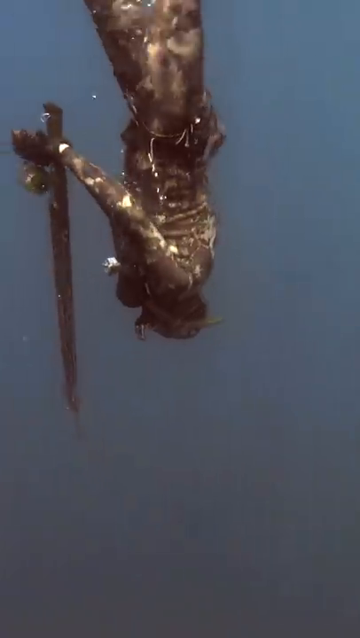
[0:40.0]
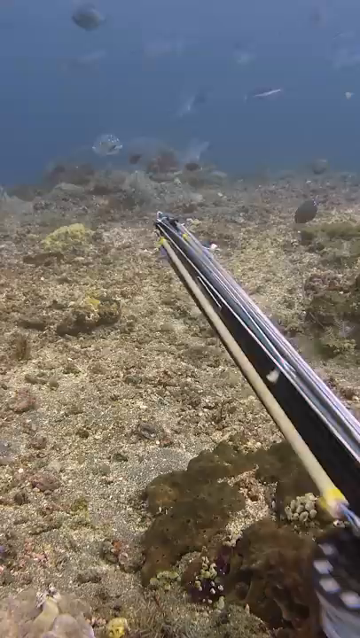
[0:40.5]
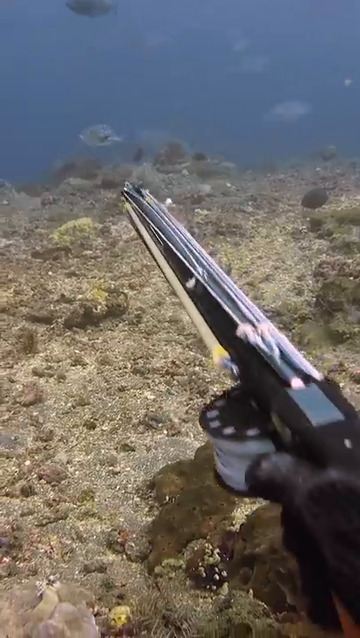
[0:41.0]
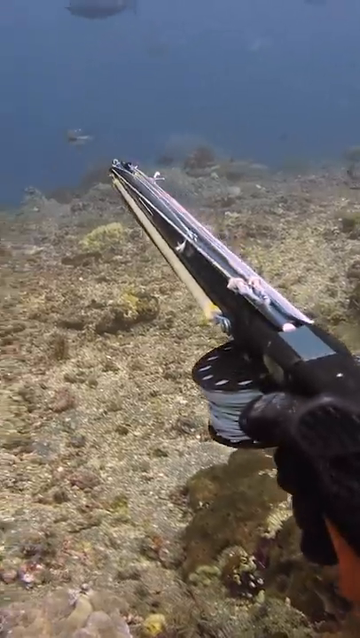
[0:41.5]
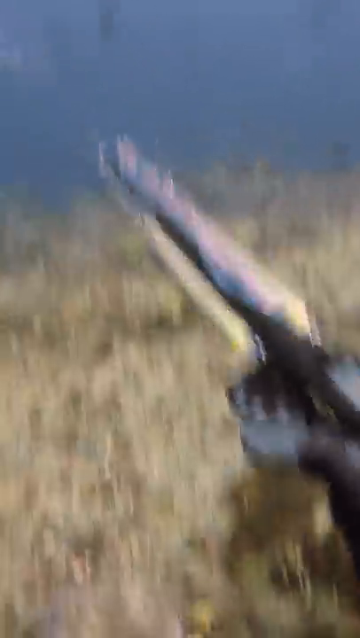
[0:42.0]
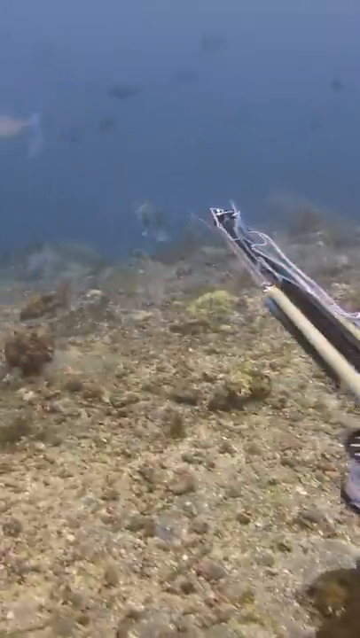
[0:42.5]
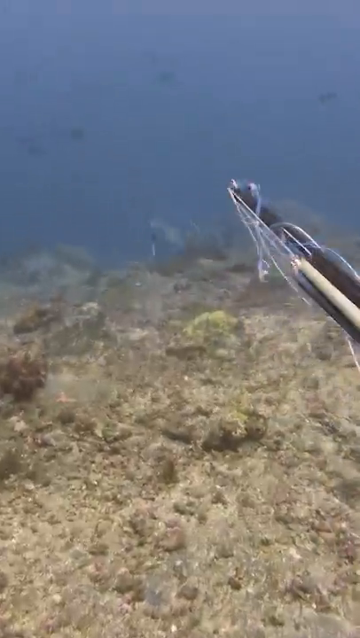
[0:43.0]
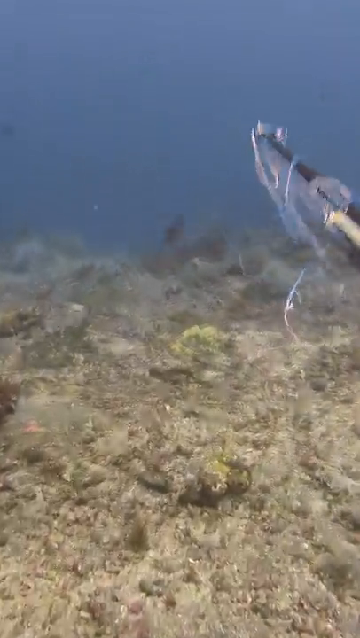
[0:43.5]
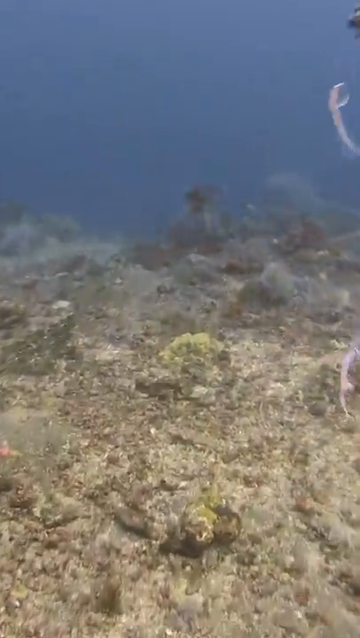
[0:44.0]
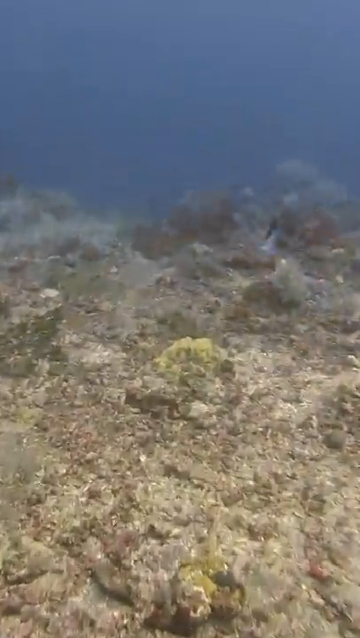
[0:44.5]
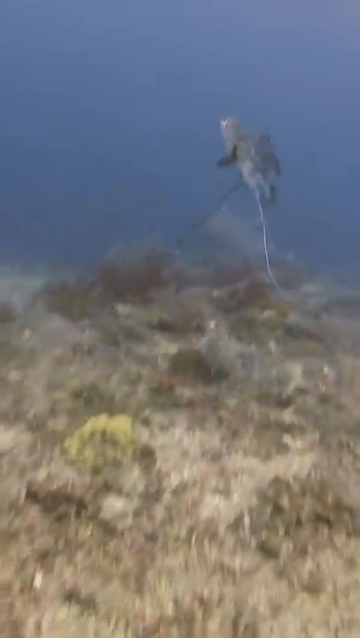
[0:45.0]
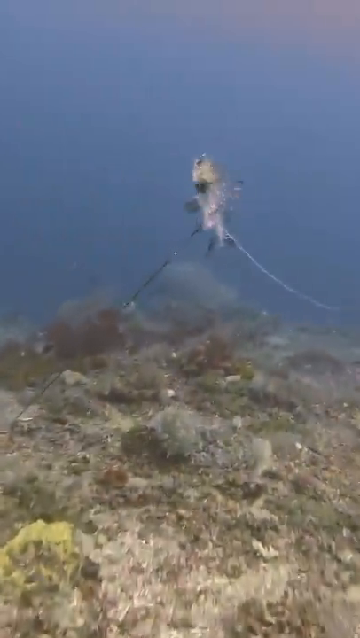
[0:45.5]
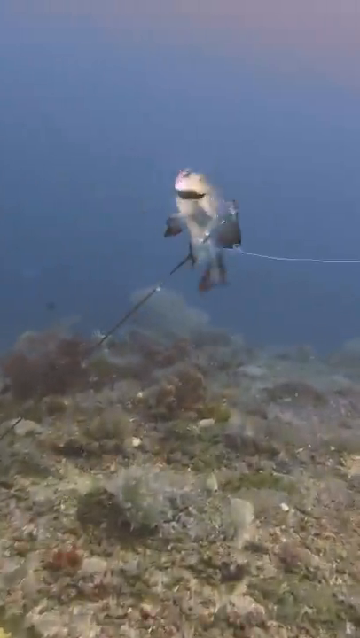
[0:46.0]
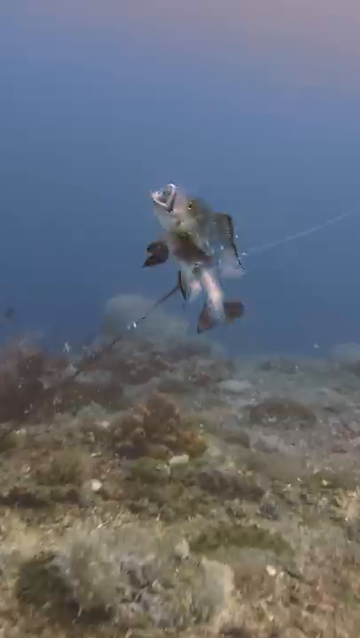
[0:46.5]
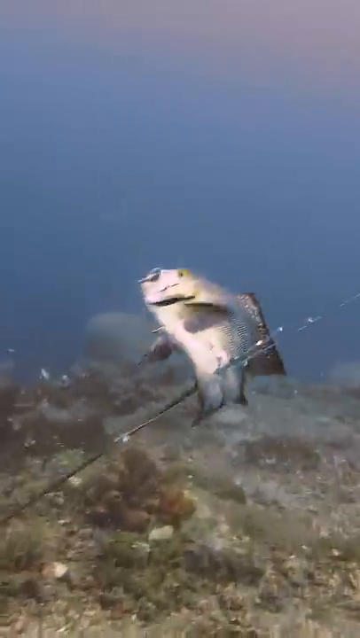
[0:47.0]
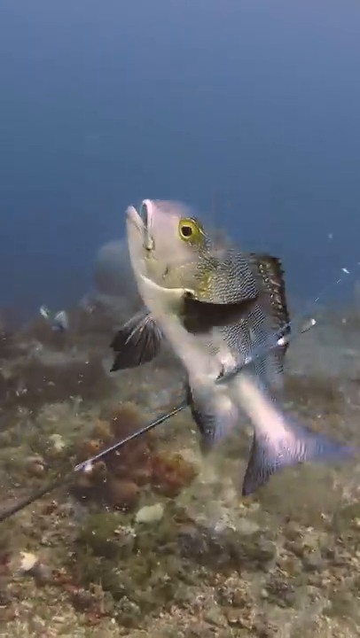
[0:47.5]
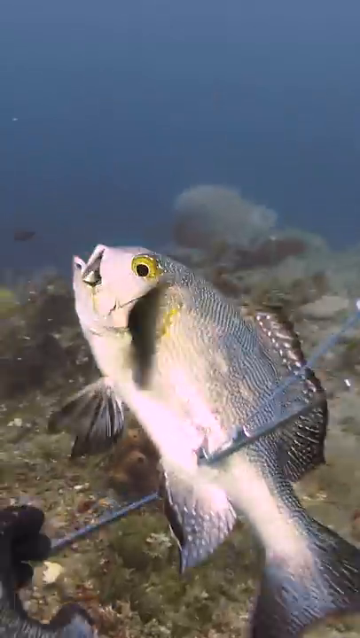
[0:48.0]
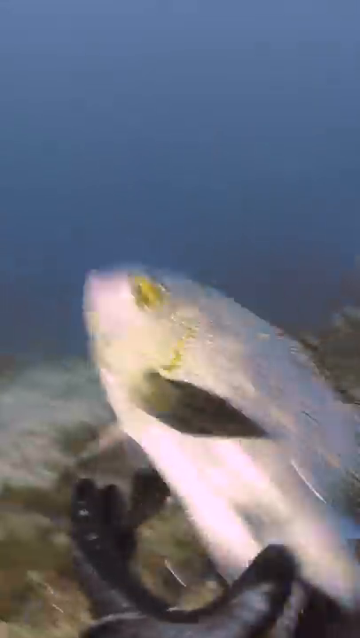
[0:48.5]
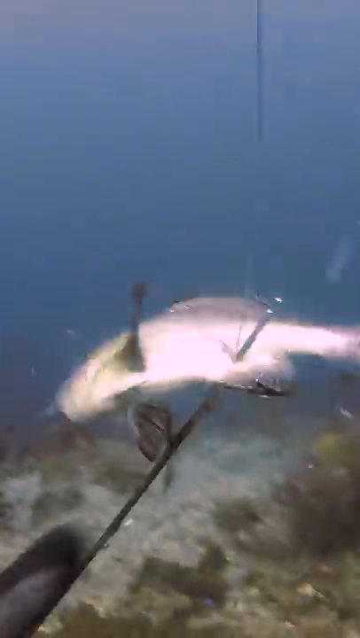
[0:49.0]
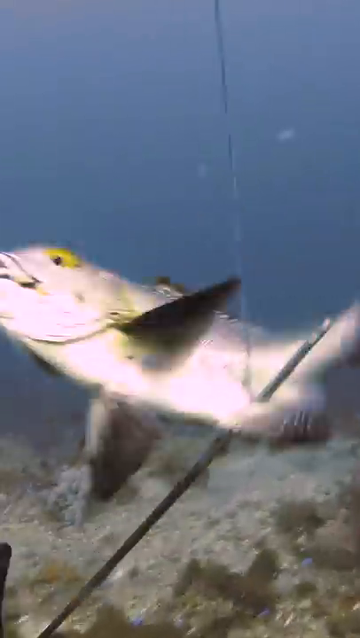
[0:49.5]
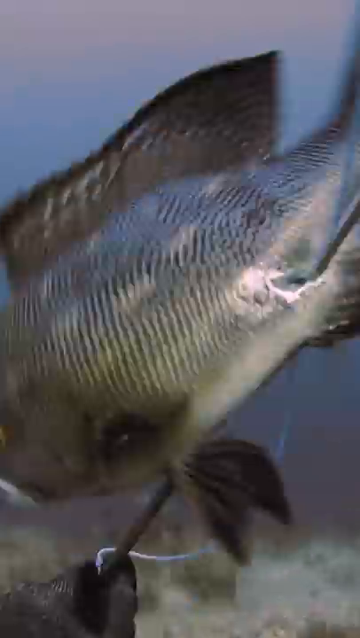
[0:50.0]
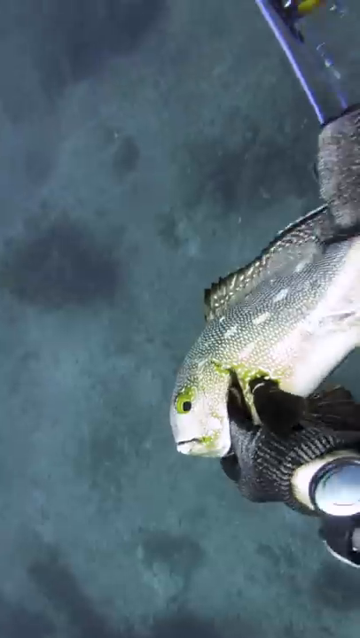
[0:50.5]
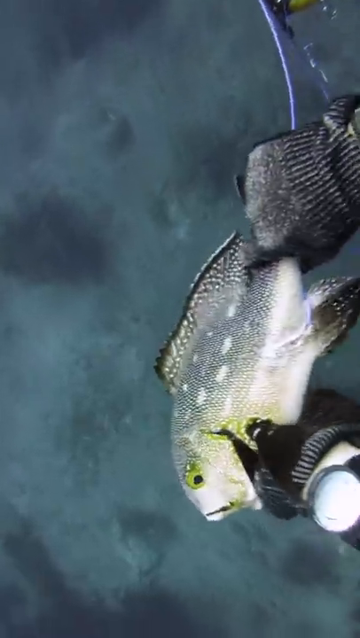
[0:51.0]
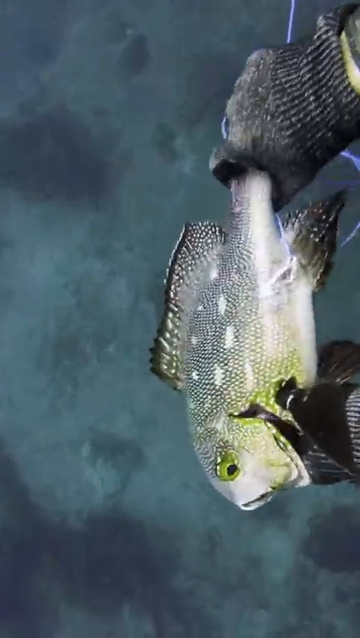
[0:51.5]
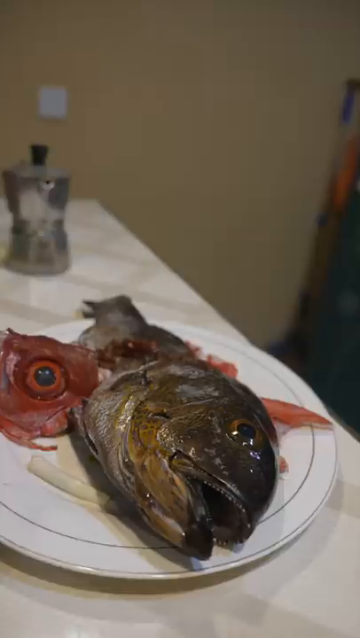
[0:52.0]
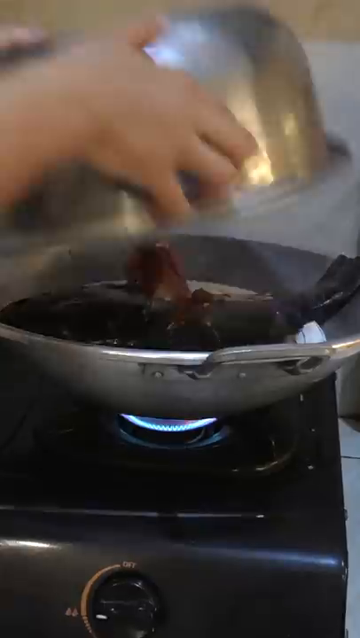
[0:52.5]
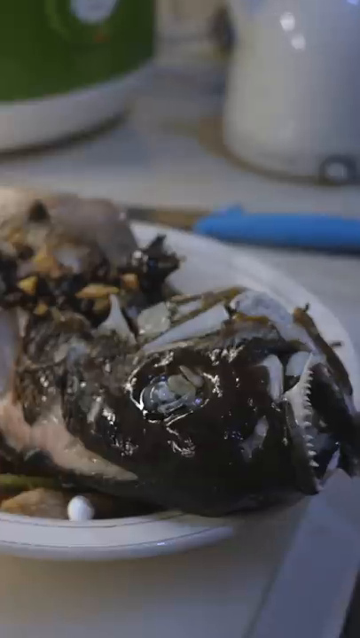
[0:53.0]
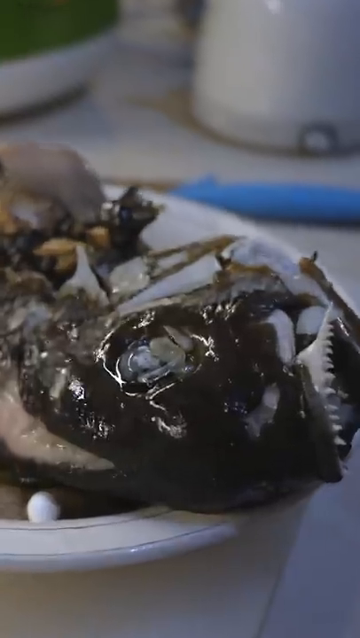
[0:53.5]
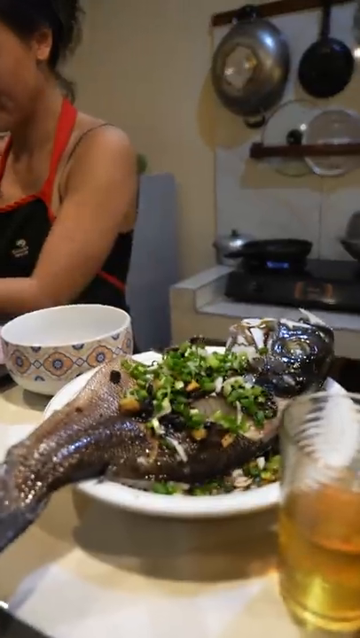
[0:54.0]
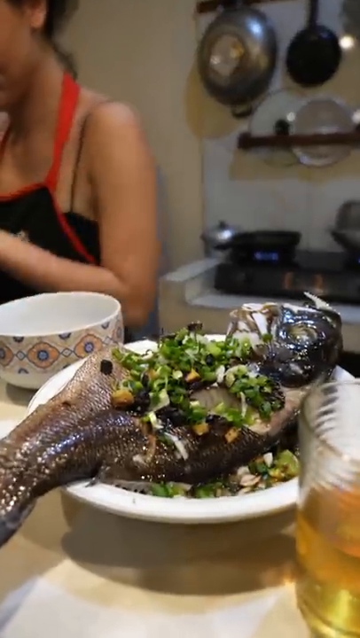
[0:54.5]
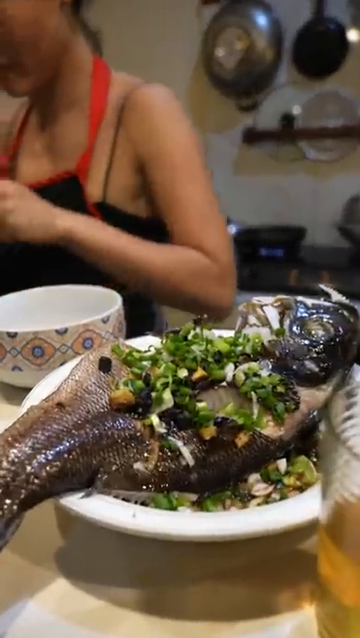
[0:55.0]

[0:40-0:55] In a first-person view, the diver shoots his speargun at more fish. The diver himself is not visible, only his right hand and the long speargun pointing down away from the camera. He appears to be on either a coral reef or the bottom of the ocean, as a lot of ground is in the frame. A small fish swims violently in front of the speargun, apparently speared. The camera moves somewhat closer, showing the fish speared almost by its tail and trying to get loose to no avail. The diver grabs it, and the scene cuts to images of the fish he speared, prepared and on a dinner plate.